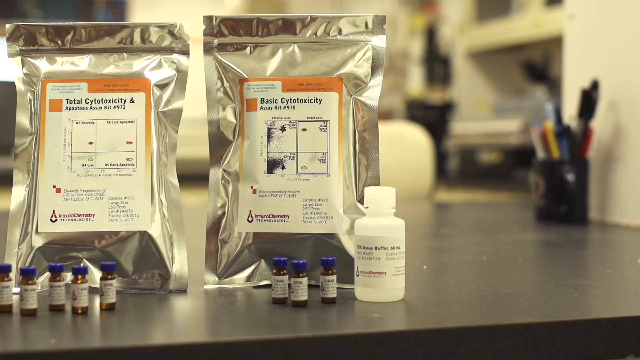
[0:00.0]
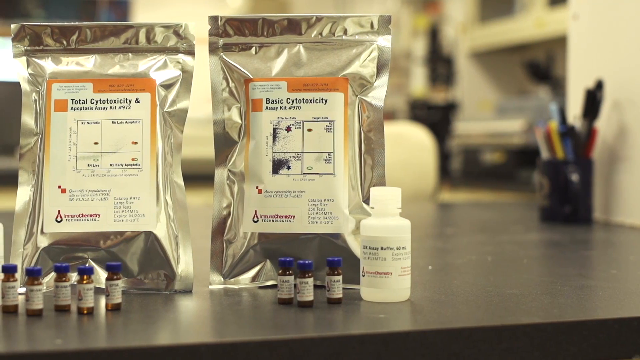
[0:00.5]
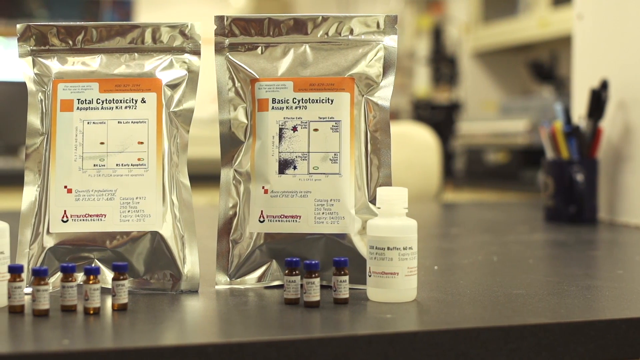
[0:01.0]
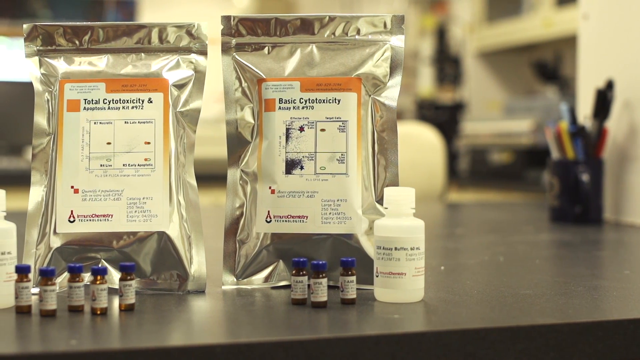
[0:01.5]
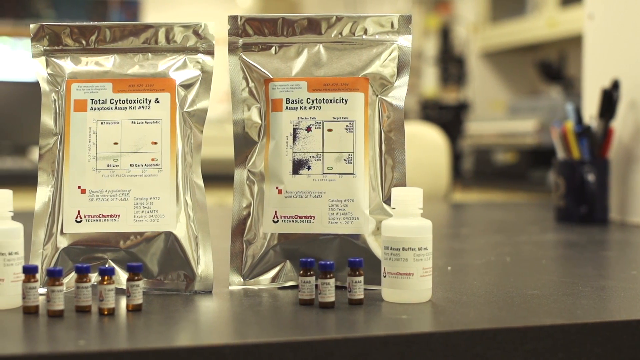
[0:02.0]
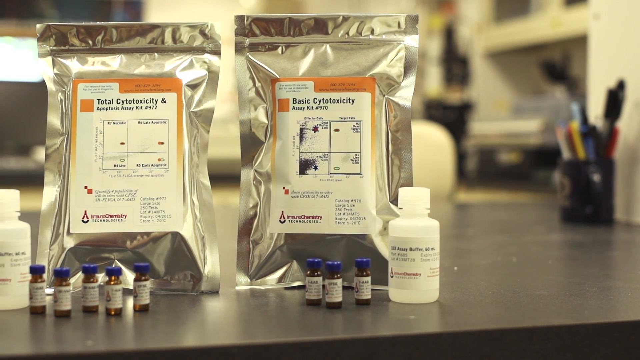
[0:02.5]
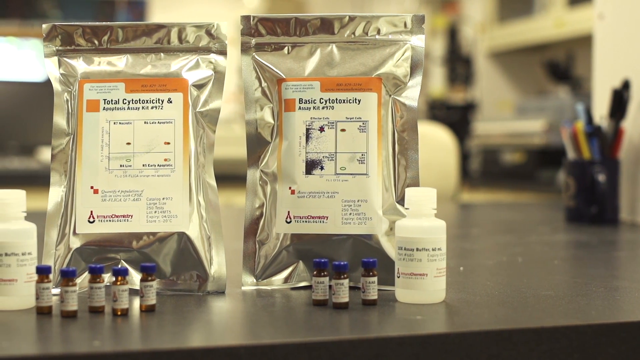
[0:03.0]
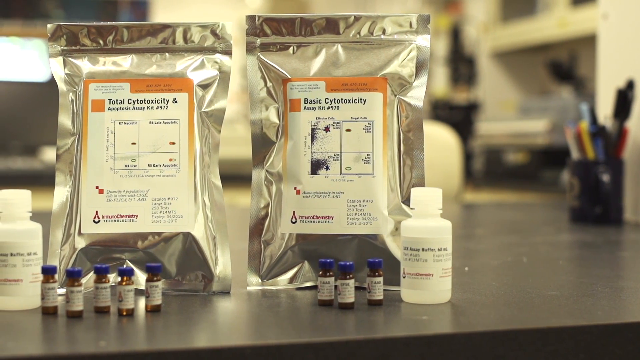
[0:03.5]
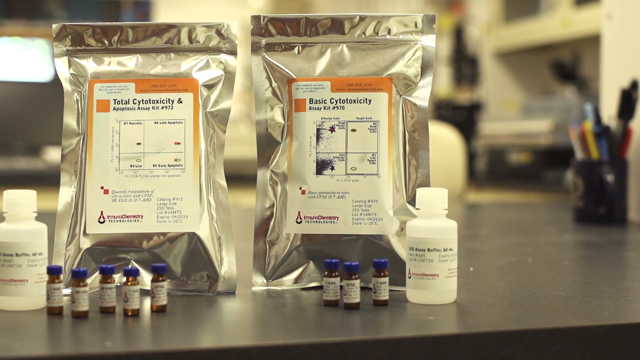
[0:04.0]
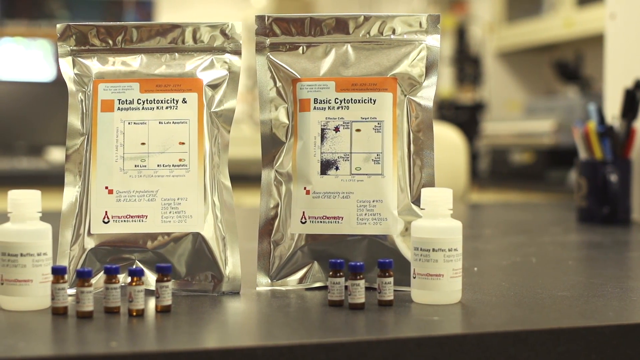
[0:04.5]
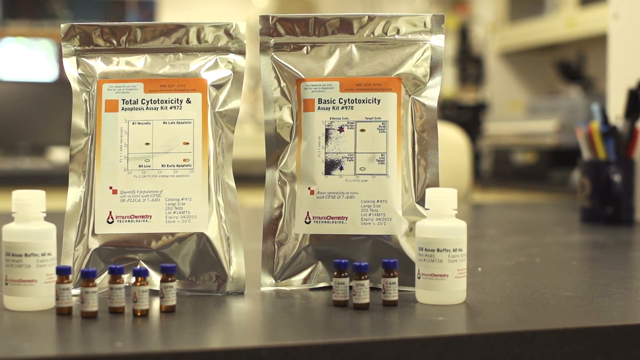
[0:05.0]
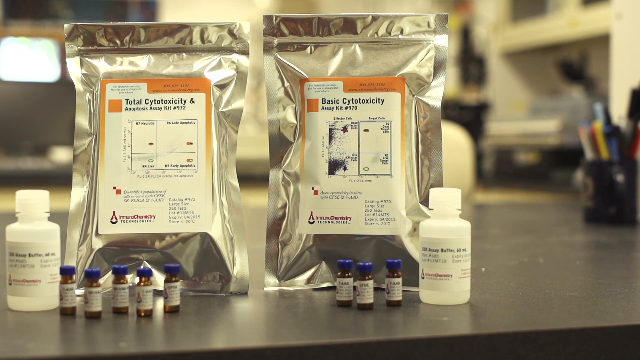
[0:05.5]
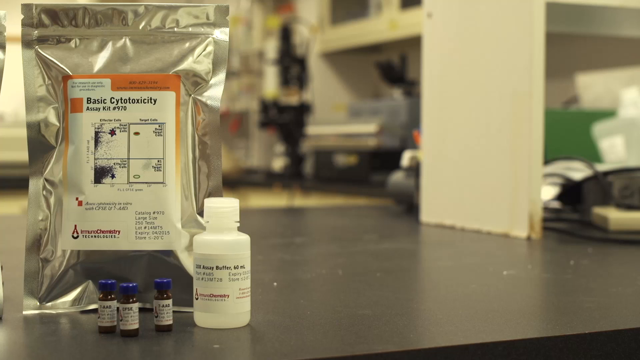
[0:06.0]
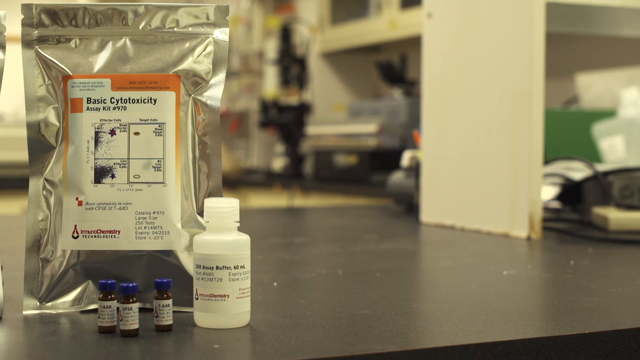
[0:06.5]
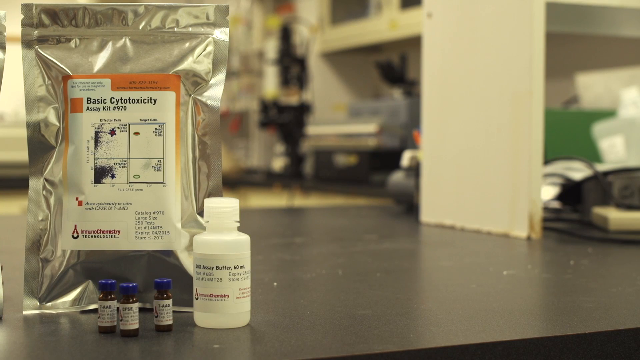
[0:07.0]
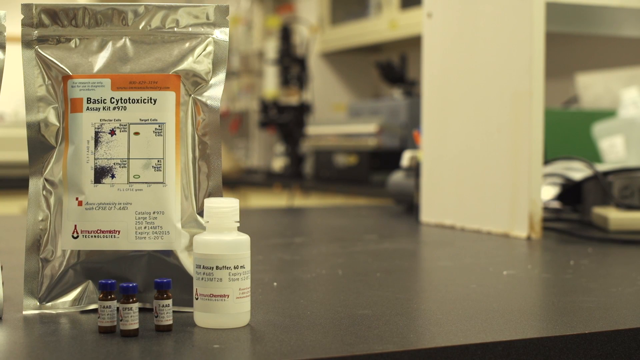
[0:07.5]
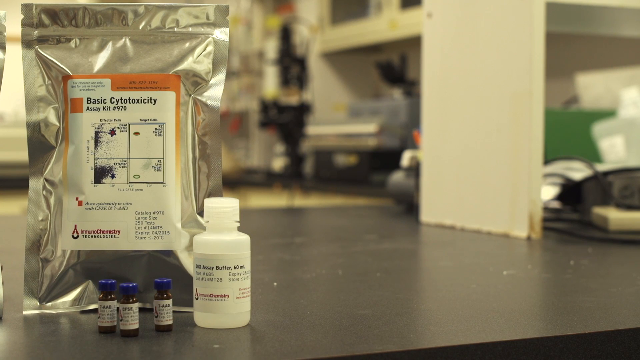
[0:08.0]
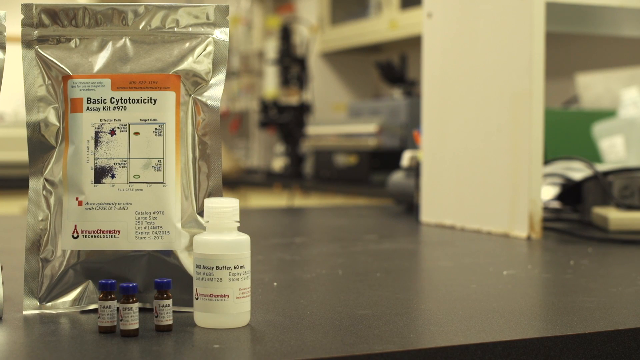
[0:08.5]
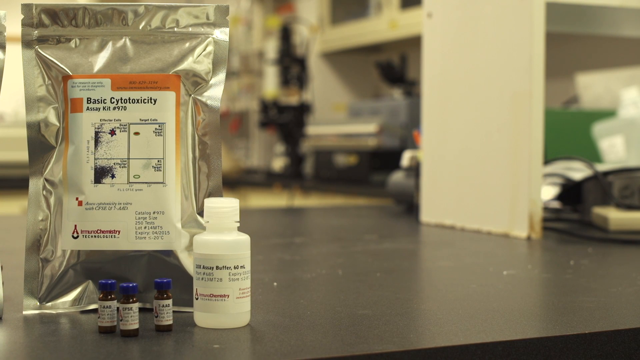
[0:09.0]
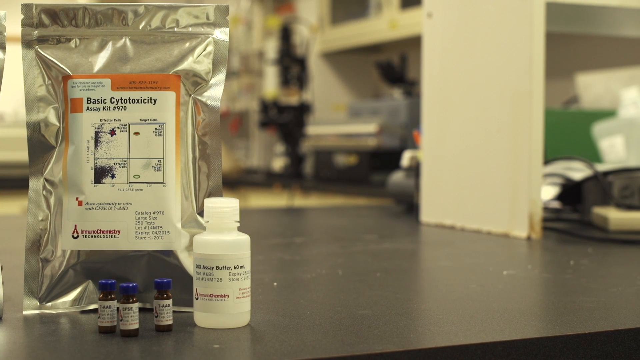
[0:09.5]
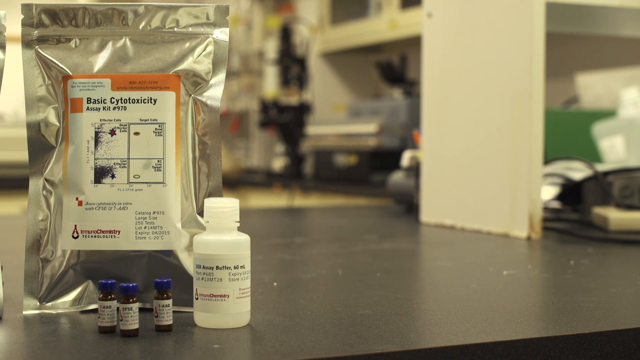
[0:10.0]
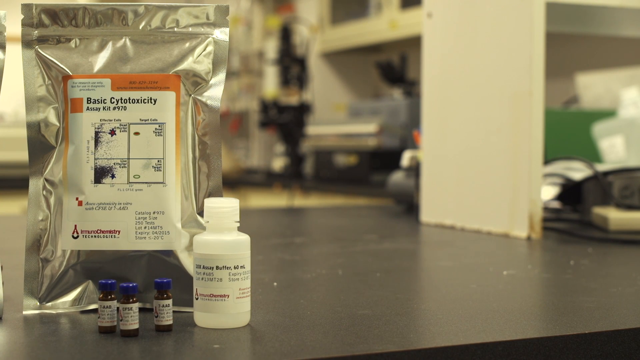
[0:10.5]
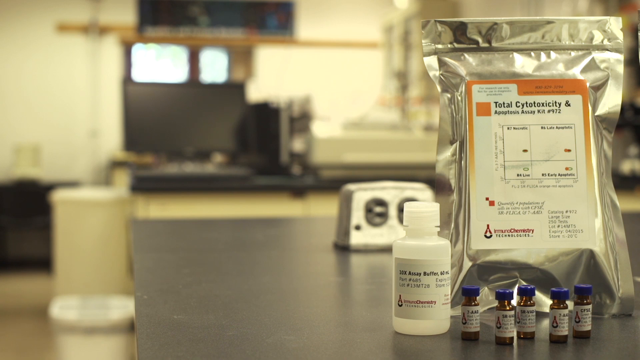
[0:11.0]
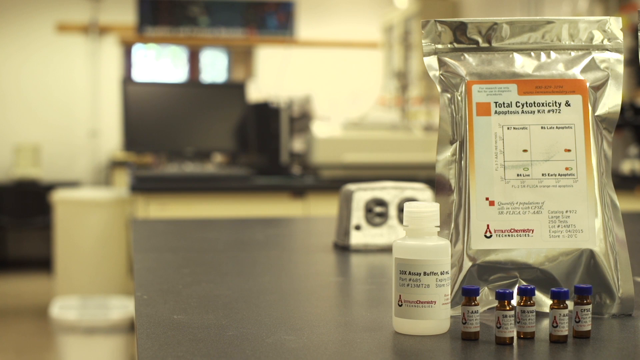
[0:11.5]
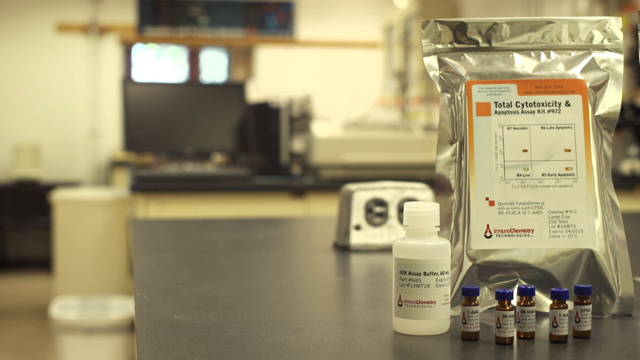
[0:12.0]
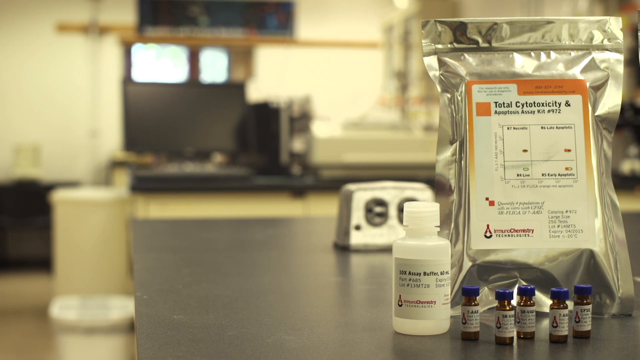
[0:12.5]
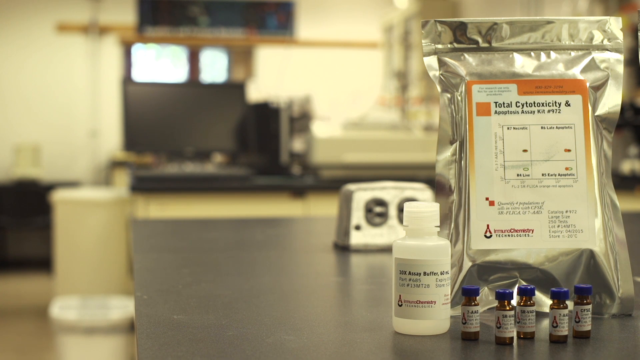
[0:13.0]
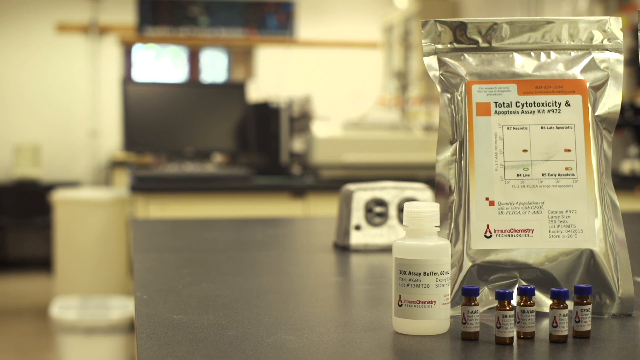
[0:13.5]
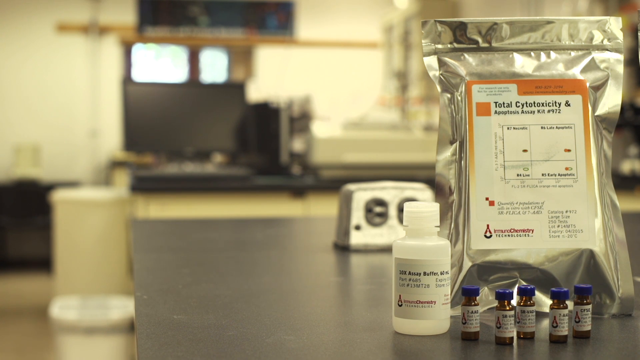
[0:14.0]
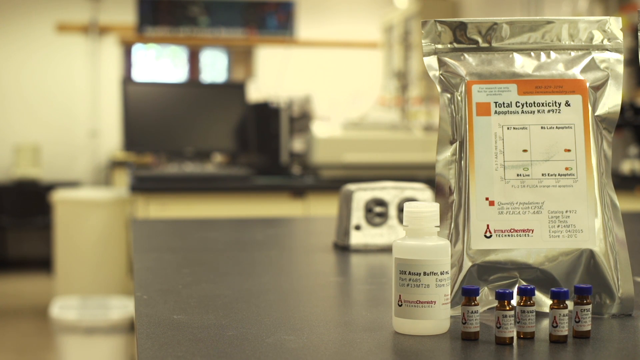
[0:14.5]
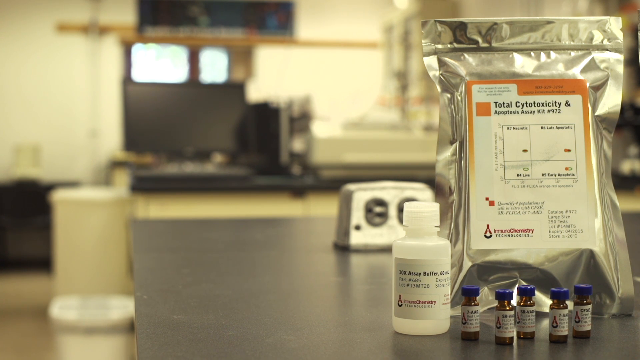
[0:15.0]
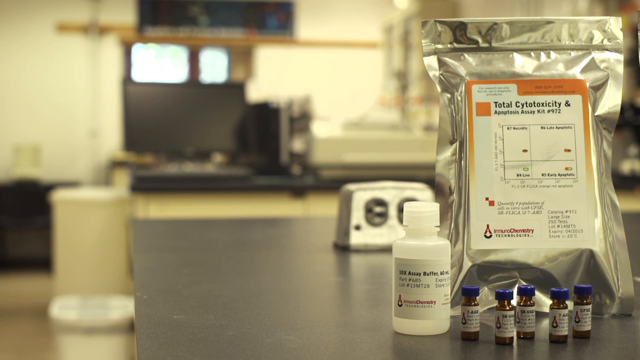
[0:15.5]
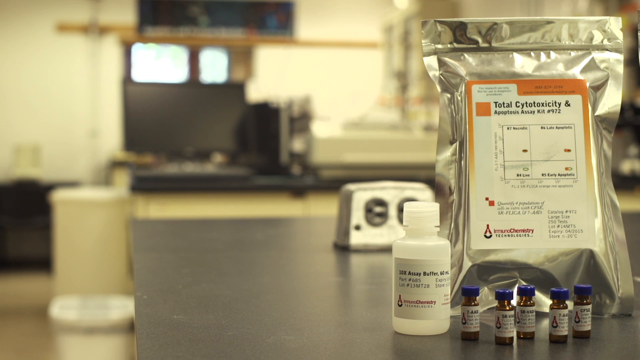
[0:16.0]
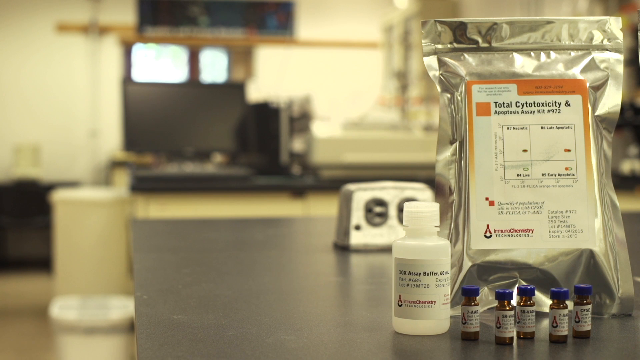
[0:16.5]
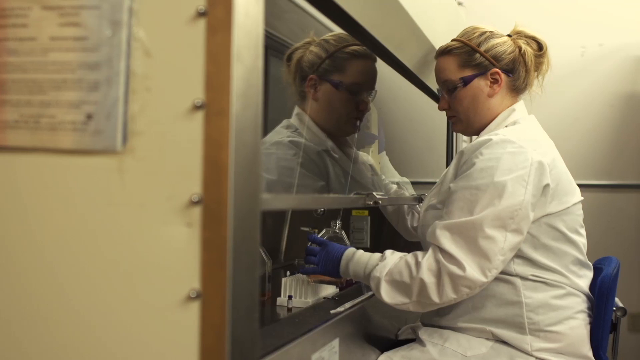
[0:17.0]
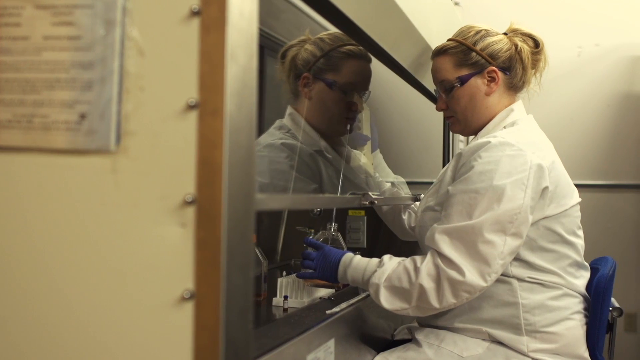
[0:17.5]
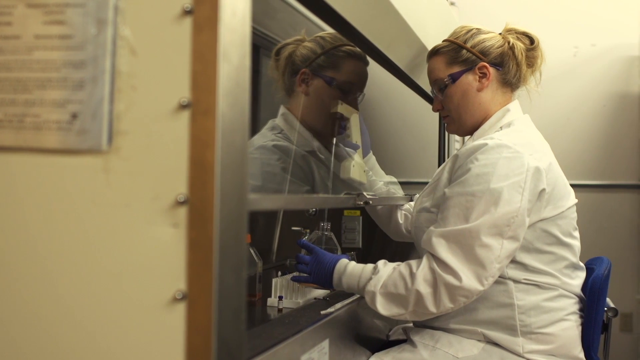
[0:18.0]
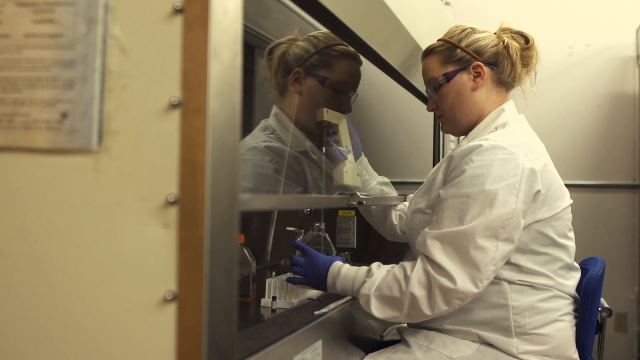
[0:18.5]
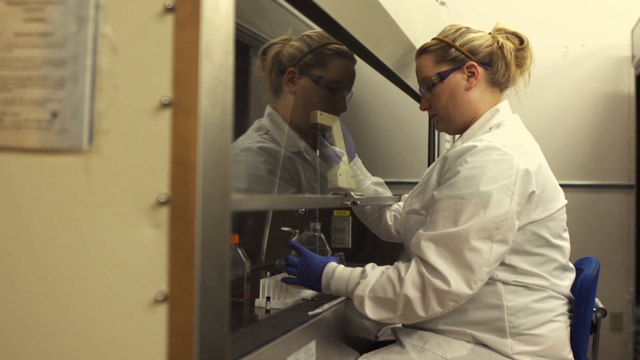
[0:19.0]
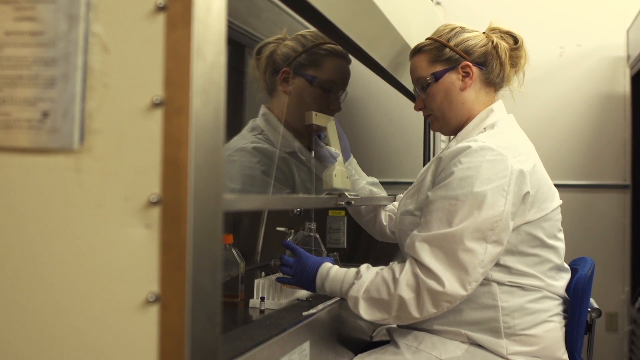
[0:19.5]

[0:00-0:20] Some apparently medical products are wrapped in foil packaging, and below them are vials of different types of medication. There is writing on them giving a brand name that has something to do with chemistry, so these seem to be either medical or chemistry products, shown as finished products in their packaging. The writing on everything is very small and hard to read. The products are on a desk in a laboratory. The video then changes to a scene of a person working in a laboratory filling small vials, apparently with the product in these packages.